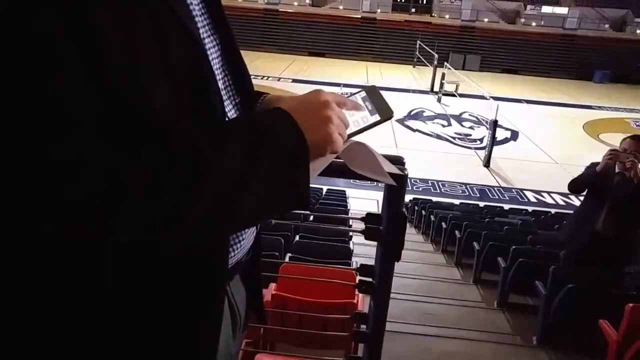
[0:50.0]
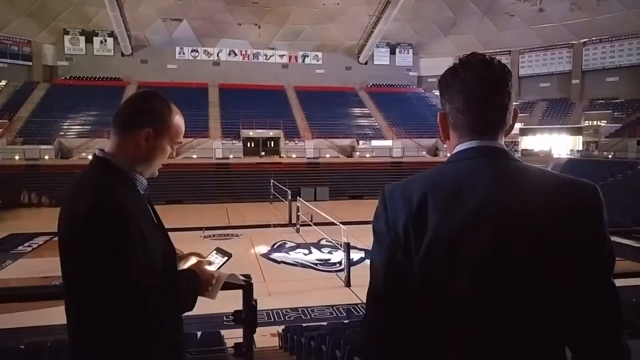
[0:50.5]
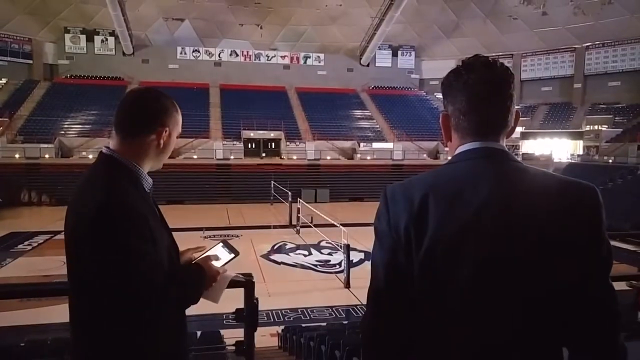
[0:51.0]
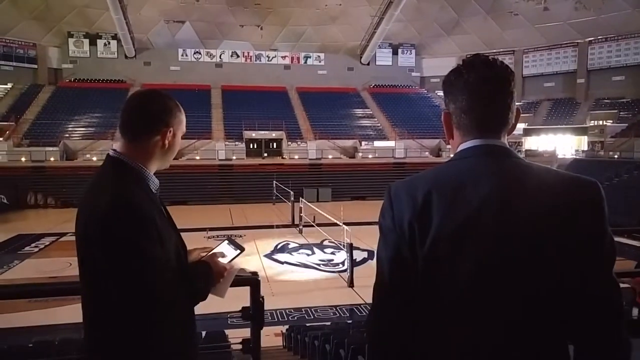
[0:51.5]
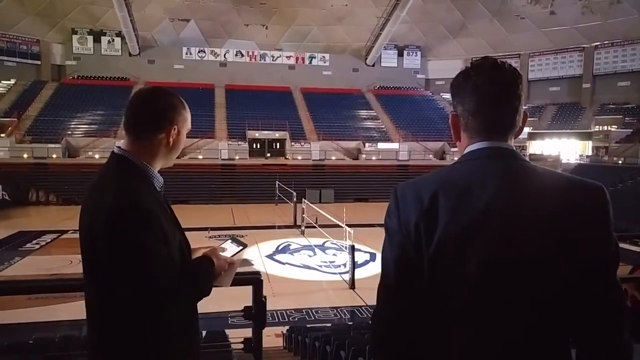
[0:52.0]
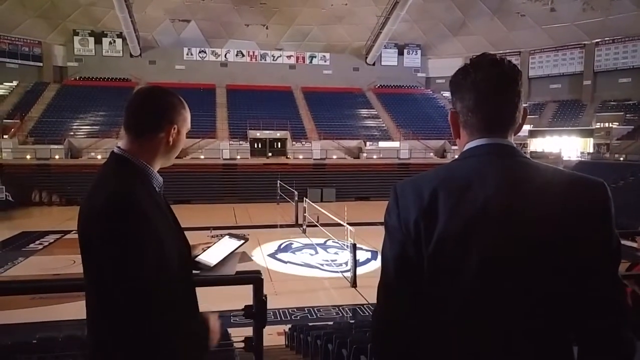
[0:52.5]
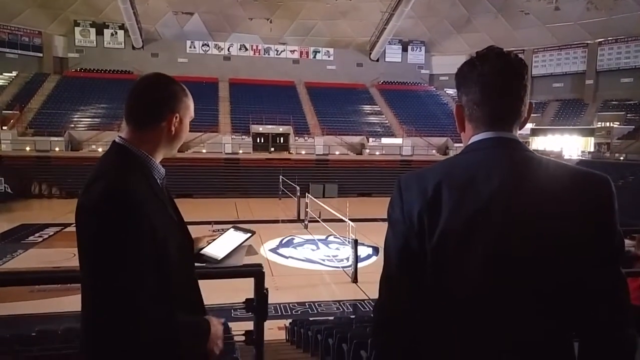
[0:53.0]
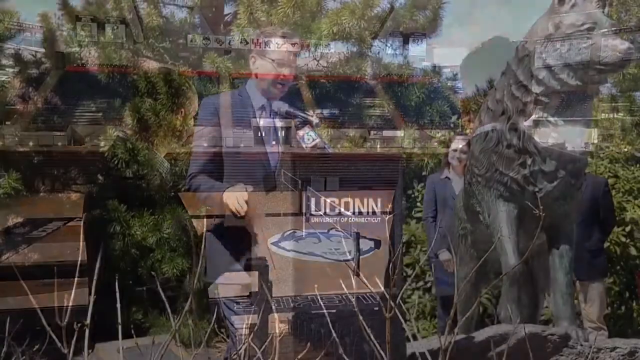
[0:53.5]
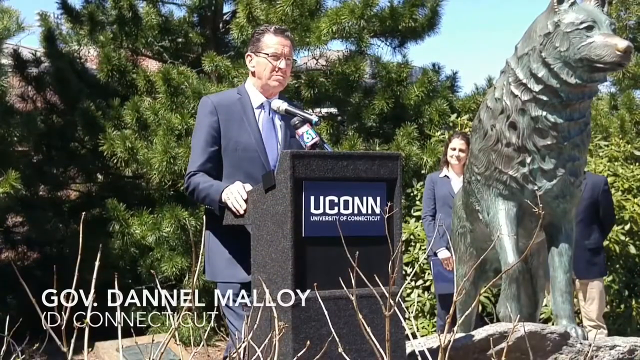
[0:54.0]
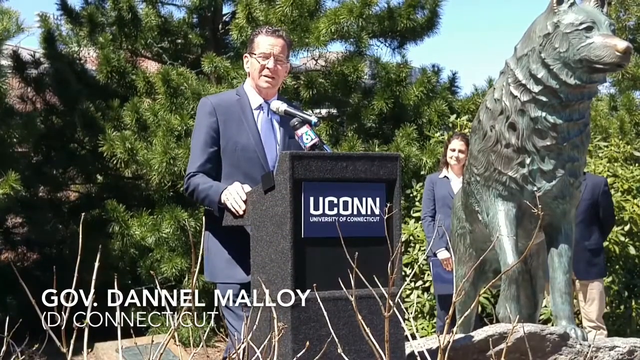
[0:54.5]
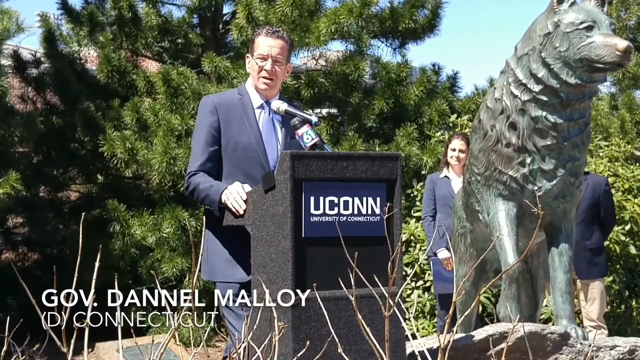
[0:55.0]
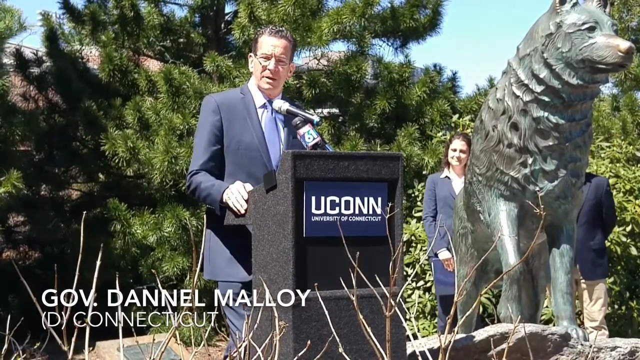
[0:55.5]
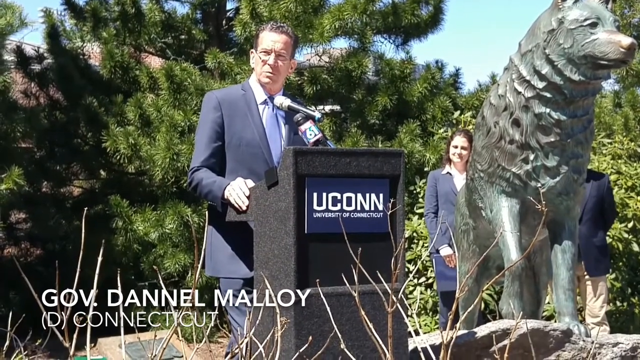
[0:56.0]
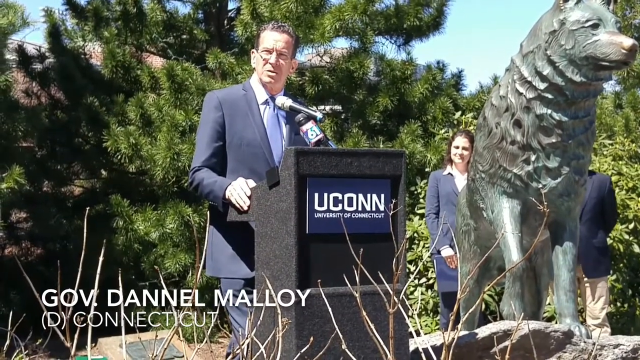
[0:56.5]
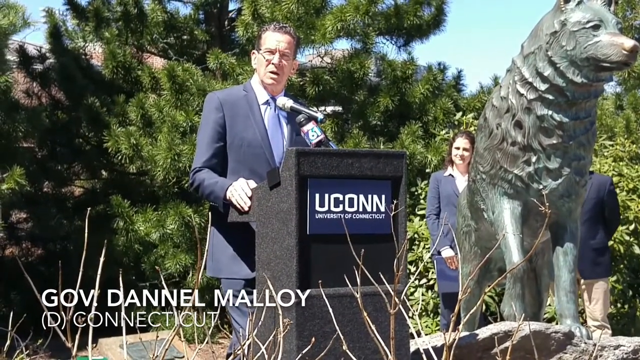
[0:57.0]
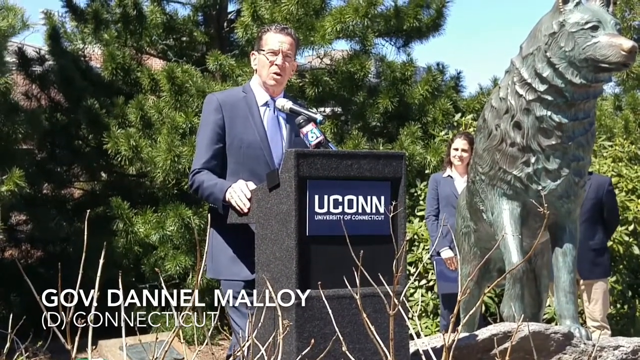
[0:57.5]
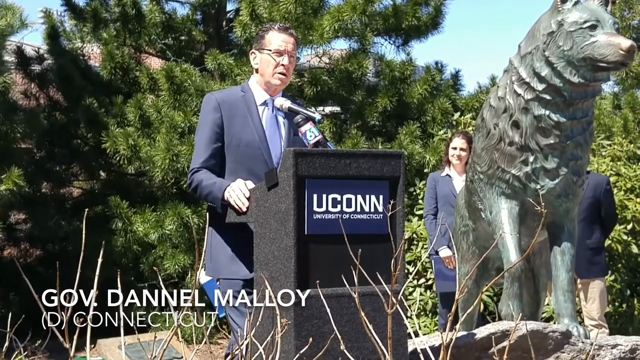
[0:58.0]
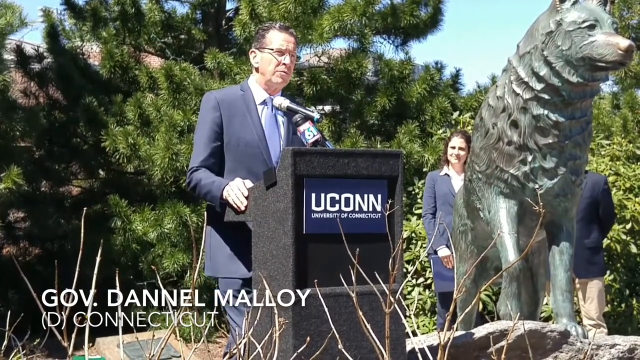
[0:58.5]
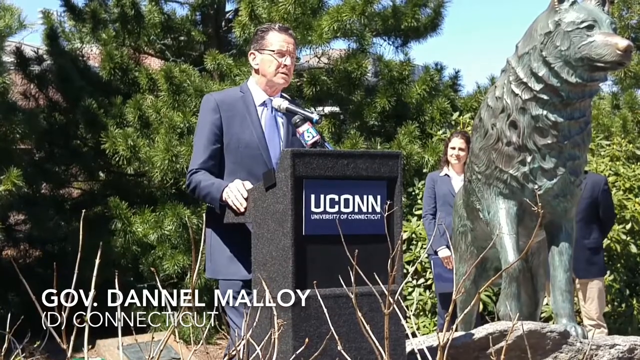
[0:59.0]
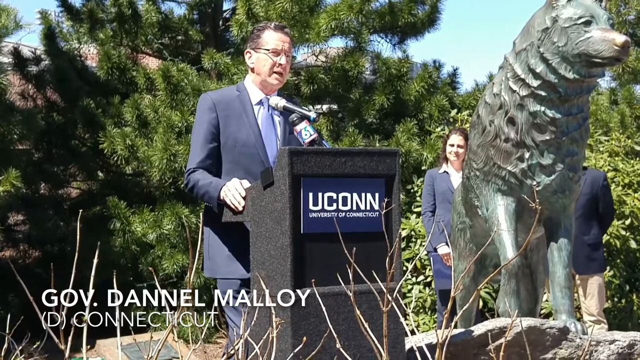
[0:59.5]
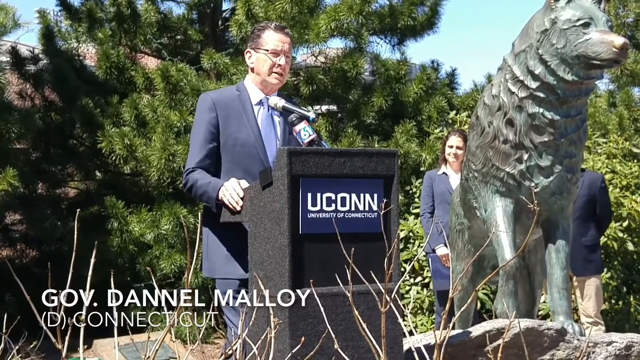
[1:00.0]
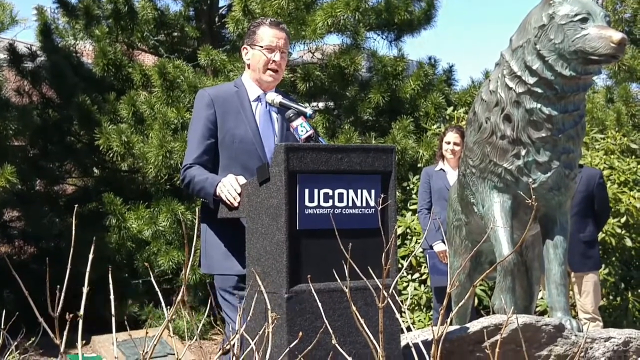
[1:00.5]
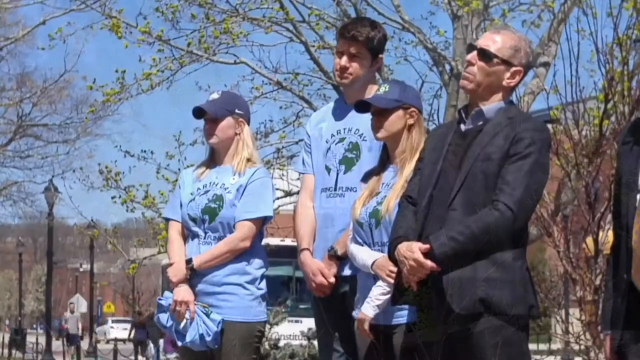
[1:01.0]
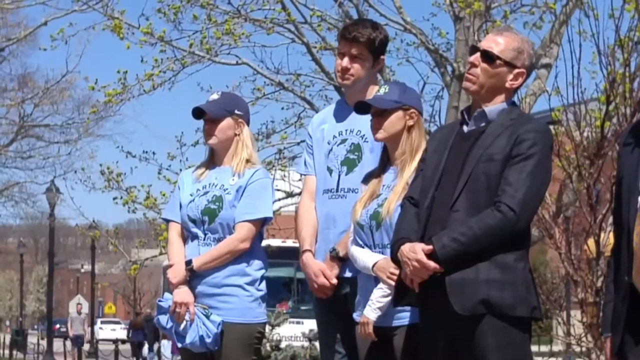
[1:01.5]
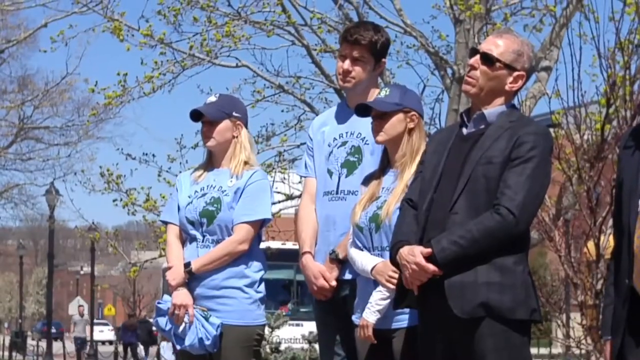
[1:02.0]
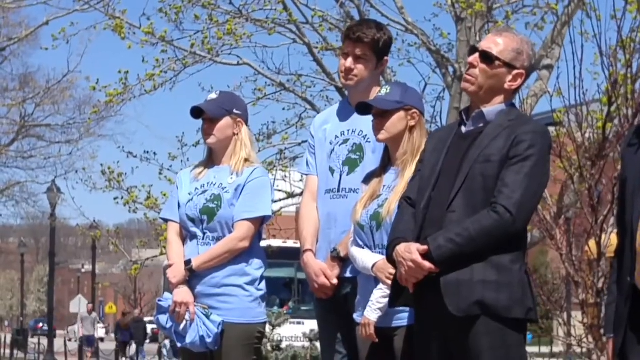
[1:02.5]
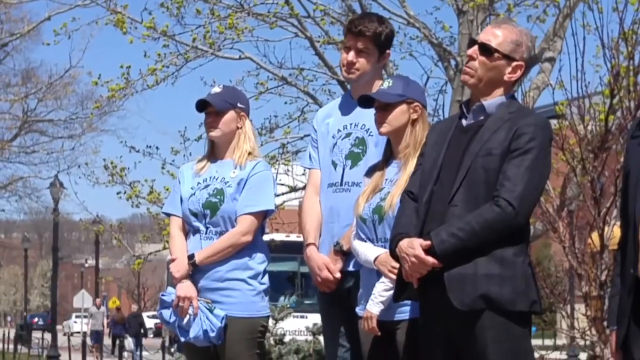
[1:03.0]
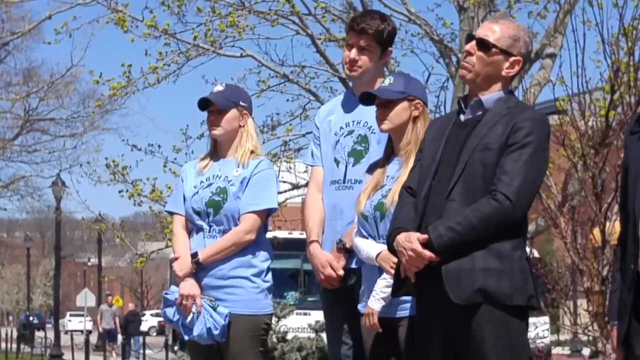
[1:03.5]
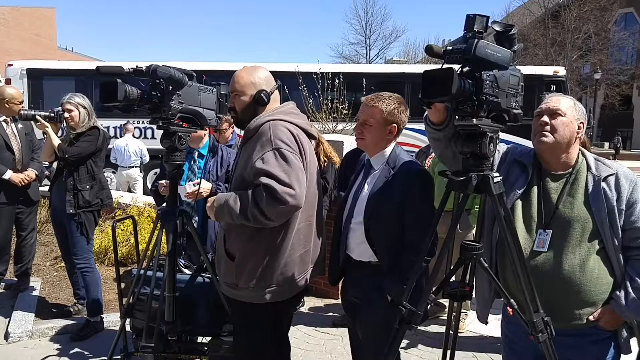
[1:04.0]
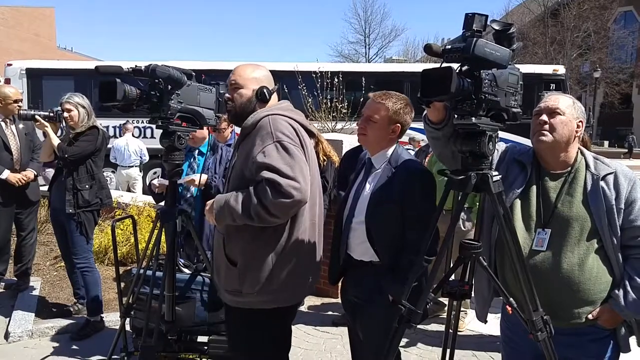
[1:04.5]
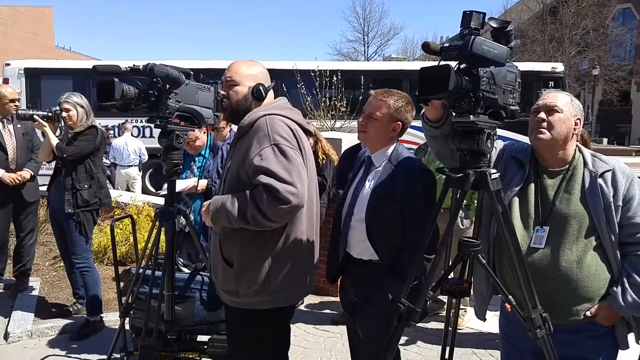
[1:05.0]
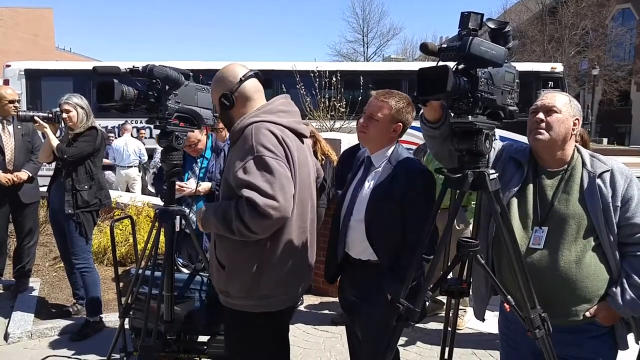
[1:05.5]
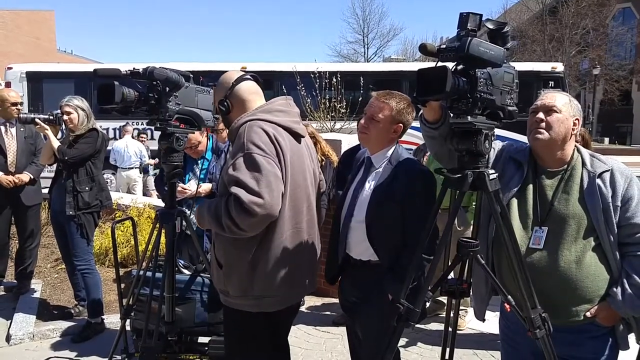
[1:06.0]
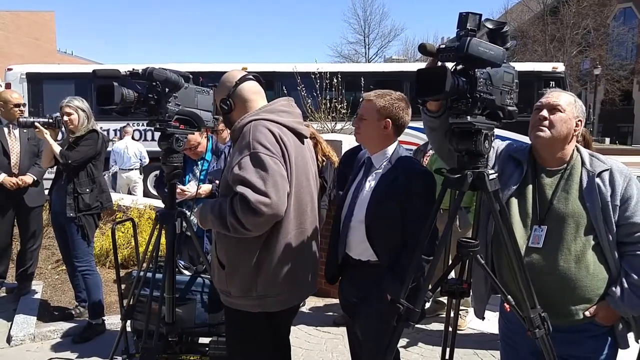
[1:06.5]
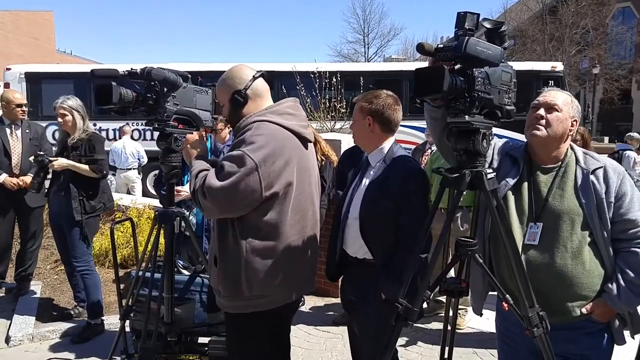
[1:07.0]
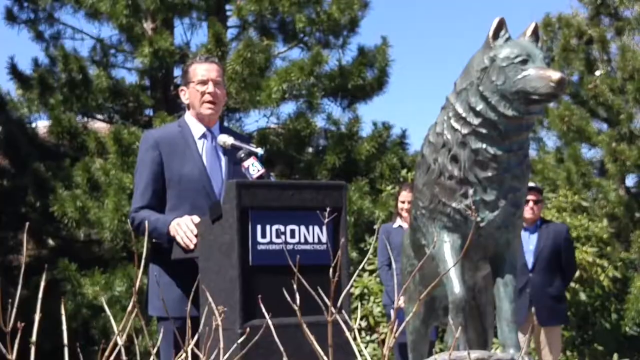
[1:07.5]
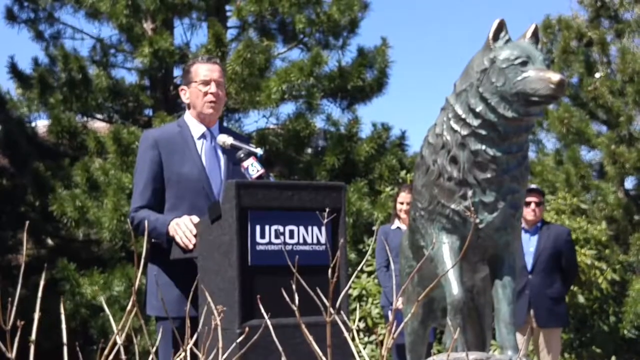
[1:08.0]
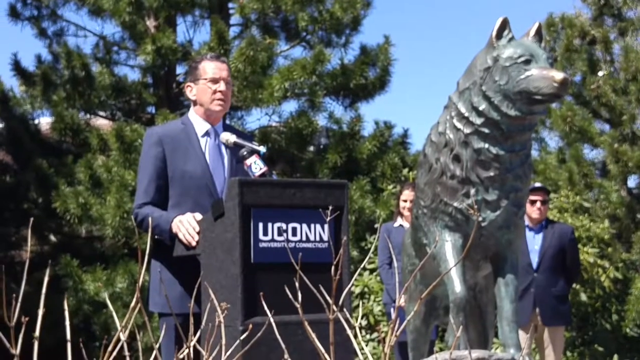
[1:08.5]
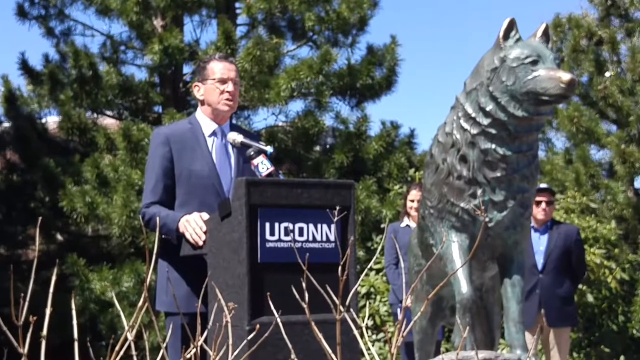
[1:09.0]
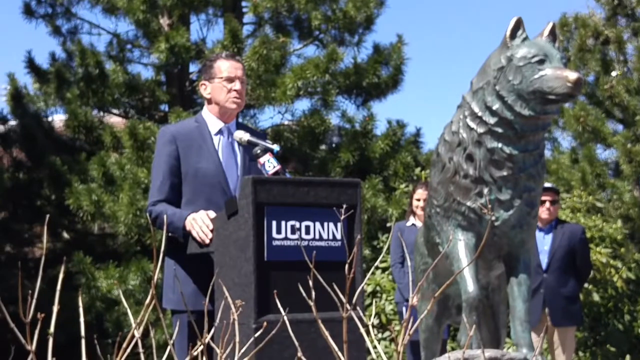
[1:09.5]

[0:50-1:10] The man dims the lights of the whole volleyball stadium from his mobile device and makes a spotlight appear in the middle of the stadium. Then Governor Daniel Malloy, Democrat, speaks at a podium at the University of Connecticut, in front of a fir pine tree. What appear to be Earth Day supporters listen. It is a sunny day that looks kind of warm, and it looks like early spring: some trees have small baby leaves while others have no leaves. Some people wear hoodies, some light coats, and there are Earth Day volunteering t-shirts that say "Earth Day" on them.